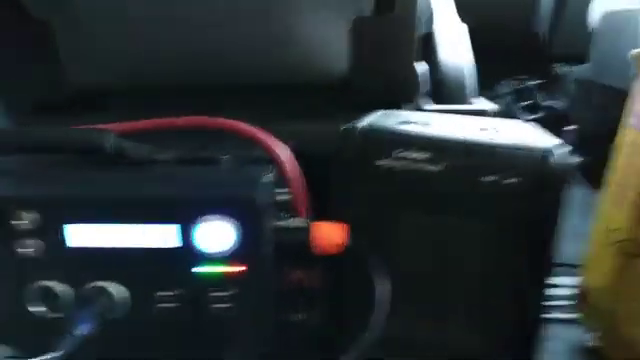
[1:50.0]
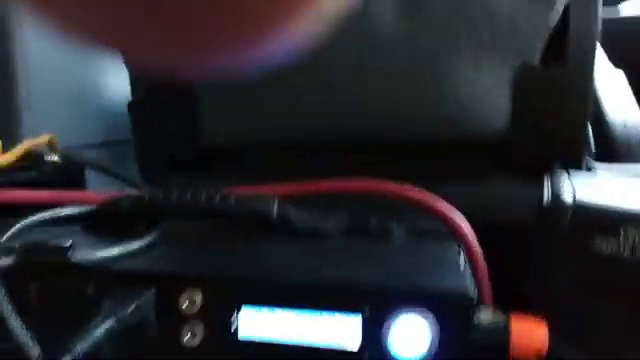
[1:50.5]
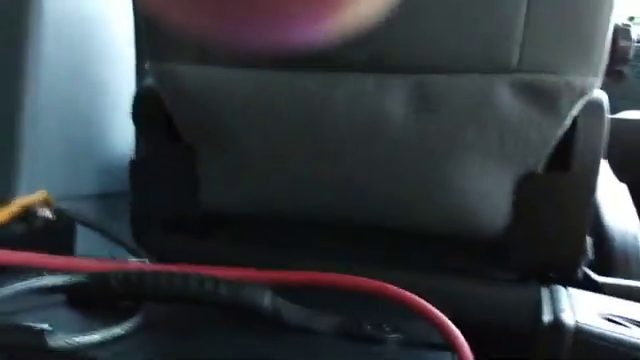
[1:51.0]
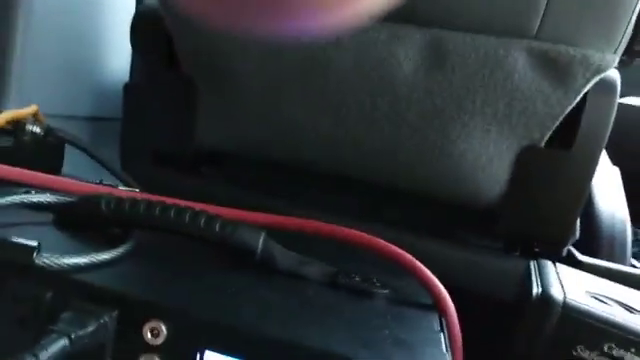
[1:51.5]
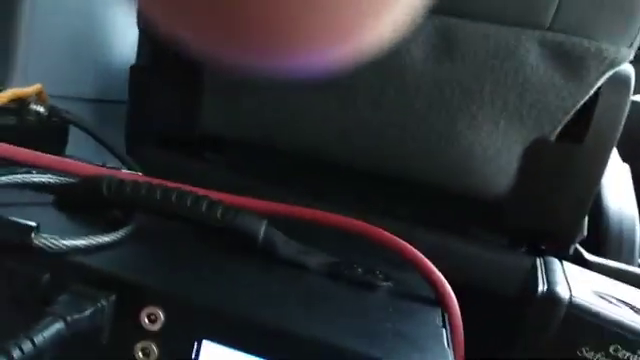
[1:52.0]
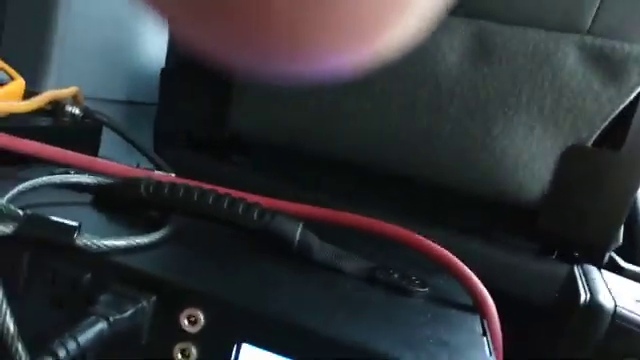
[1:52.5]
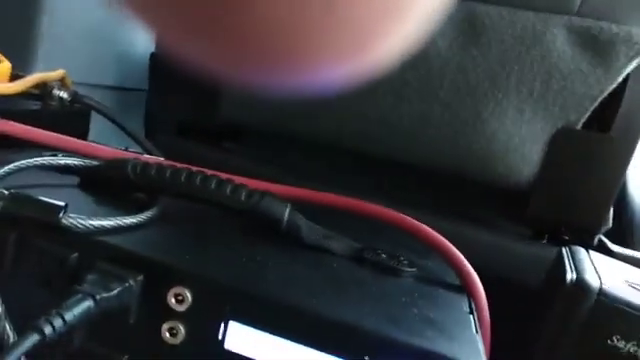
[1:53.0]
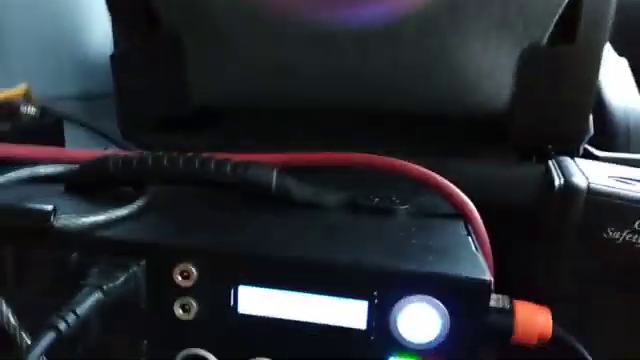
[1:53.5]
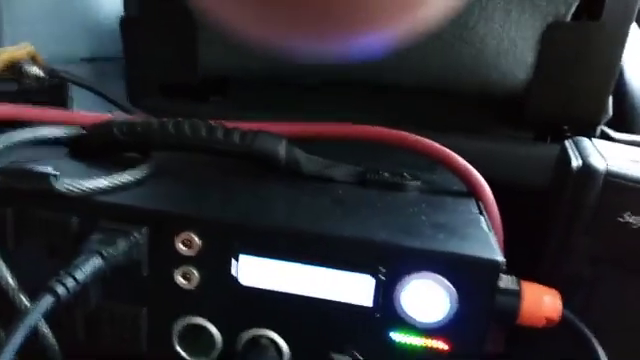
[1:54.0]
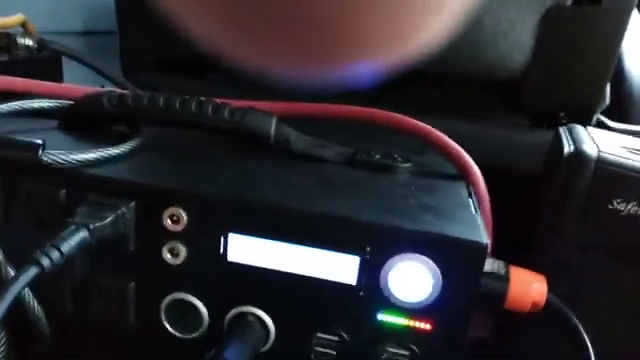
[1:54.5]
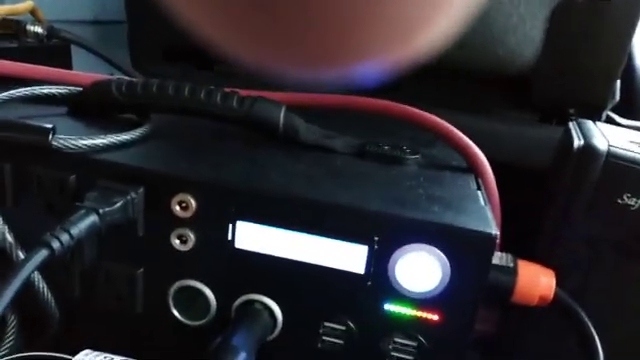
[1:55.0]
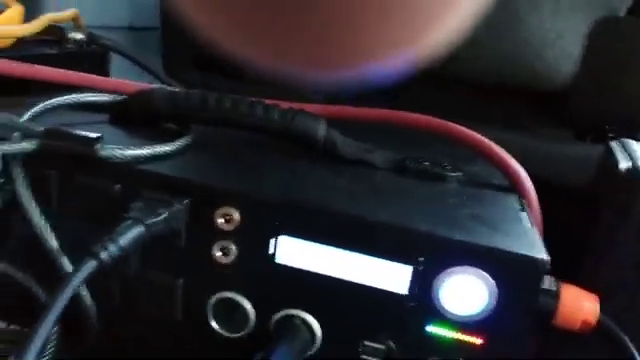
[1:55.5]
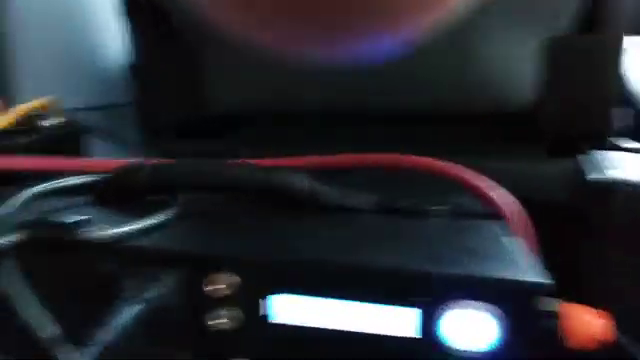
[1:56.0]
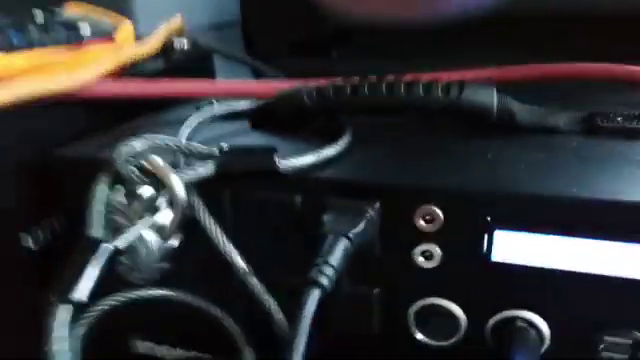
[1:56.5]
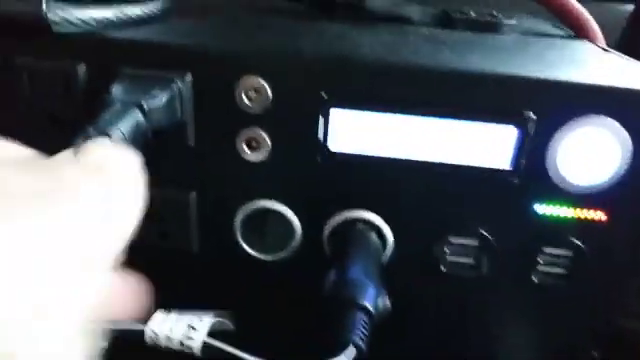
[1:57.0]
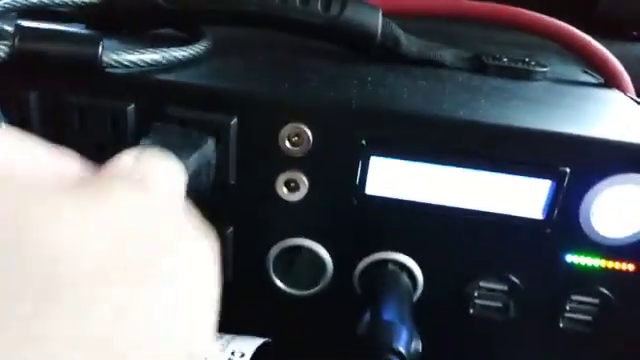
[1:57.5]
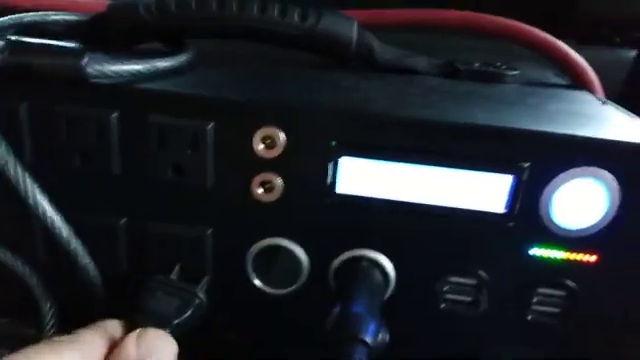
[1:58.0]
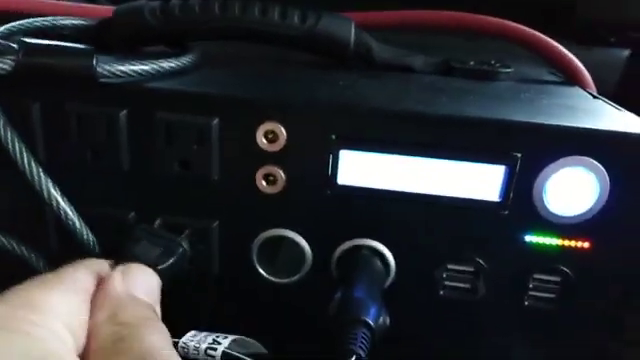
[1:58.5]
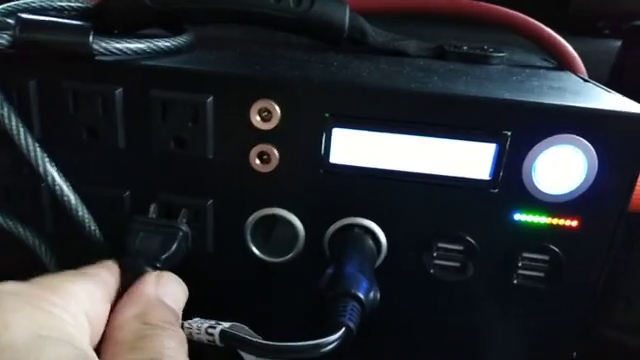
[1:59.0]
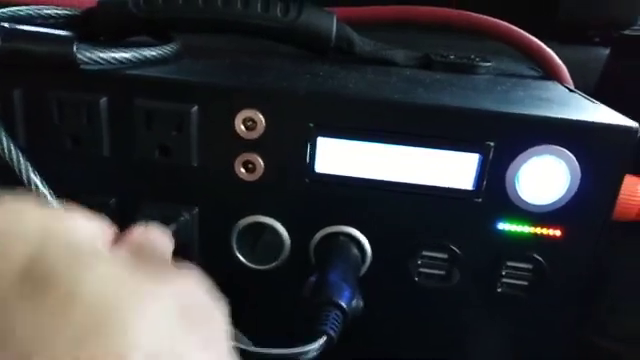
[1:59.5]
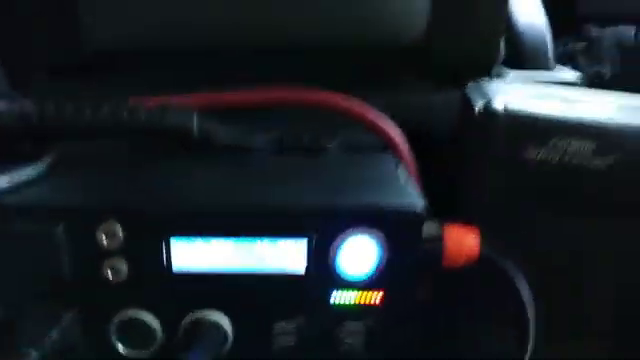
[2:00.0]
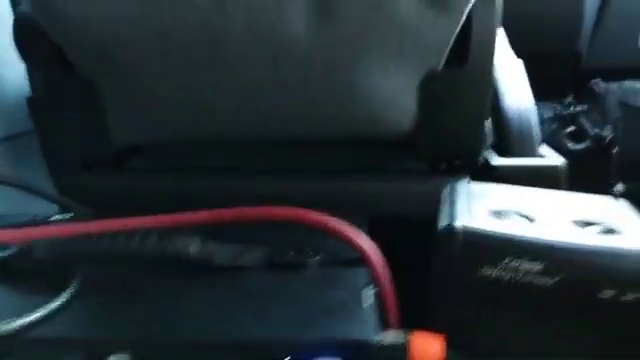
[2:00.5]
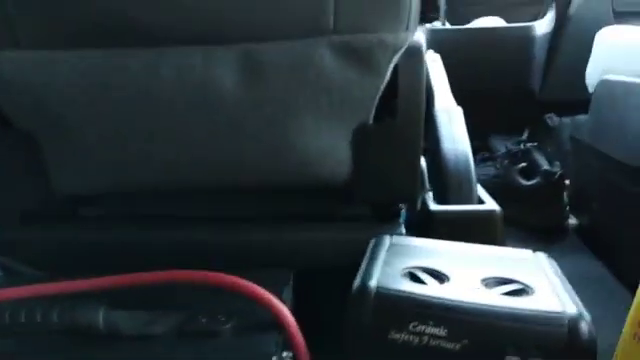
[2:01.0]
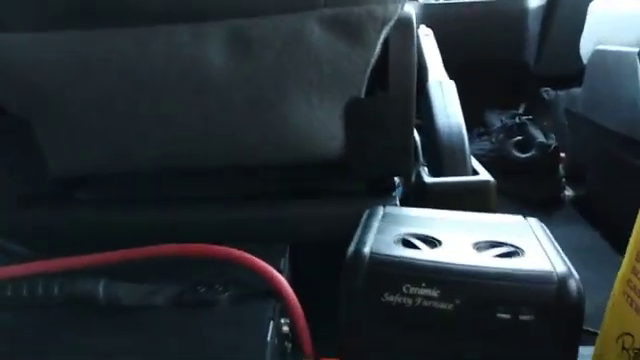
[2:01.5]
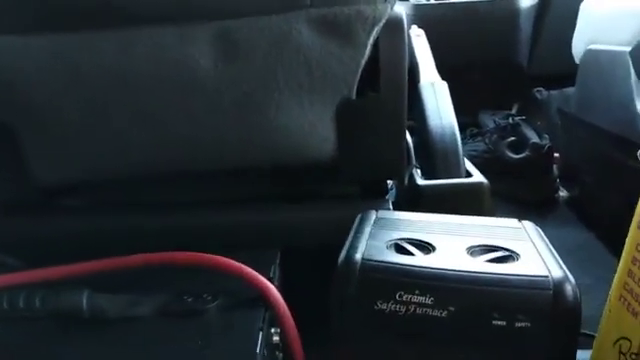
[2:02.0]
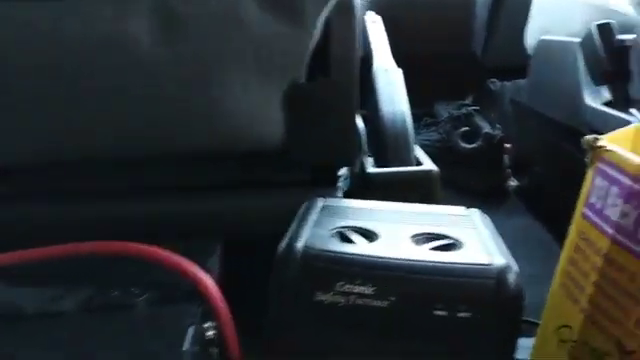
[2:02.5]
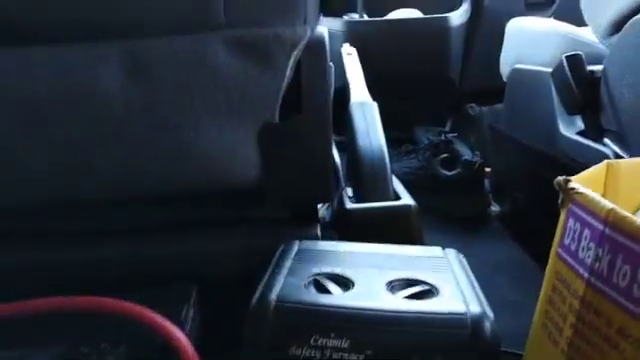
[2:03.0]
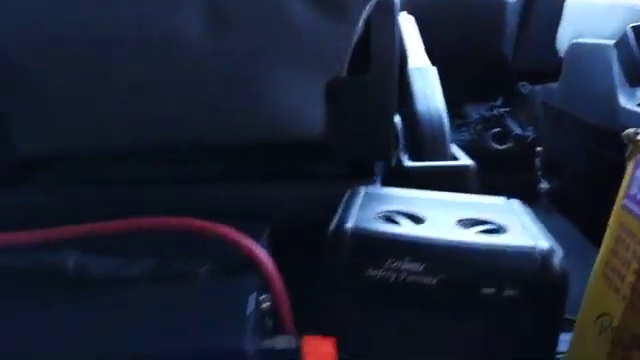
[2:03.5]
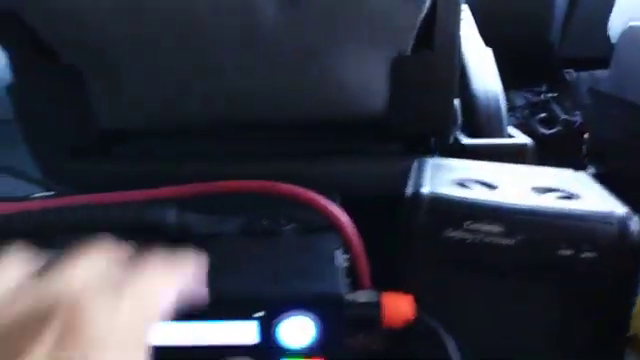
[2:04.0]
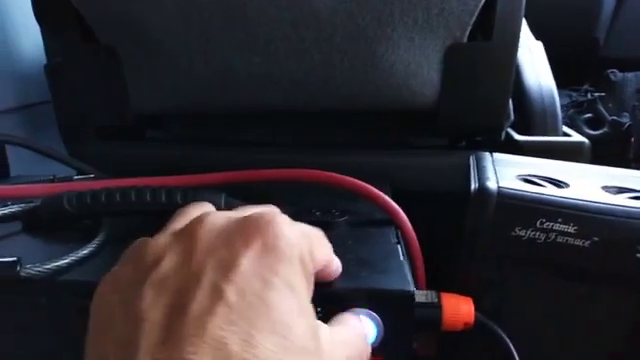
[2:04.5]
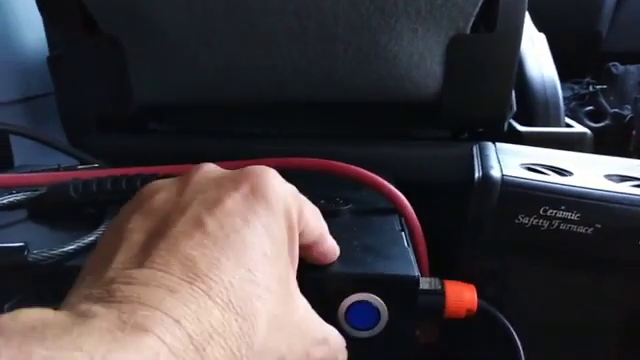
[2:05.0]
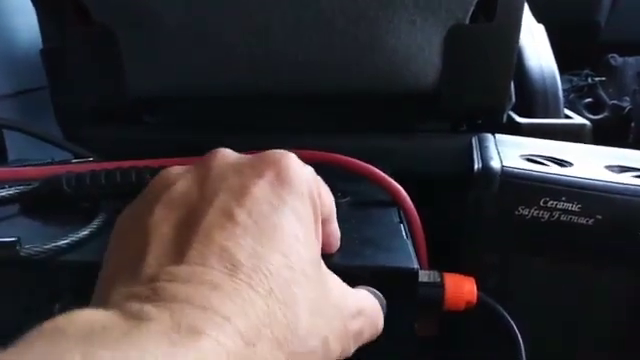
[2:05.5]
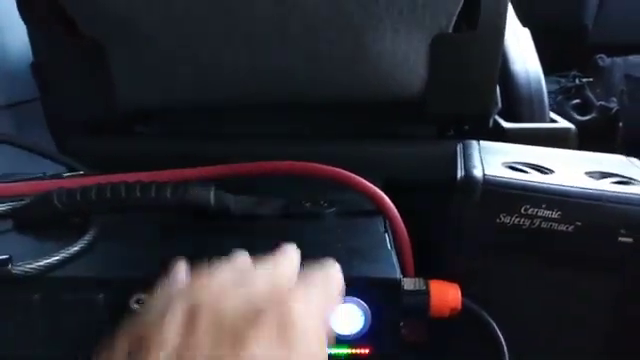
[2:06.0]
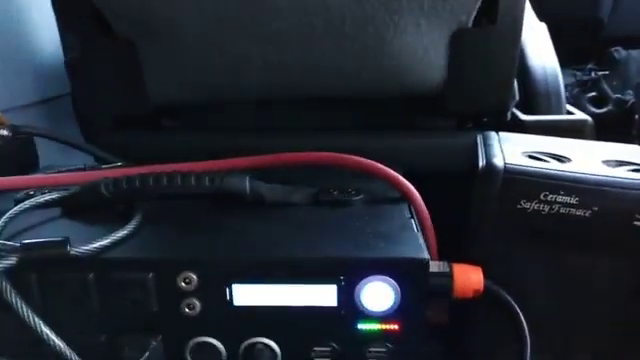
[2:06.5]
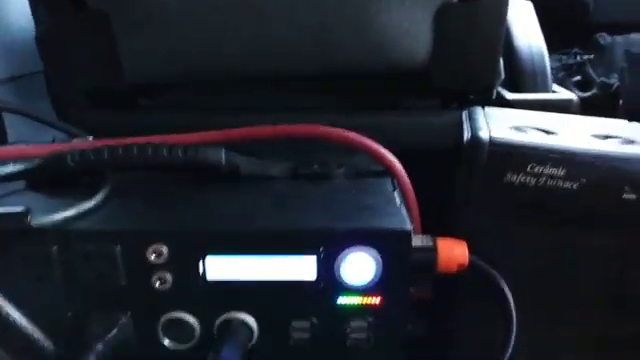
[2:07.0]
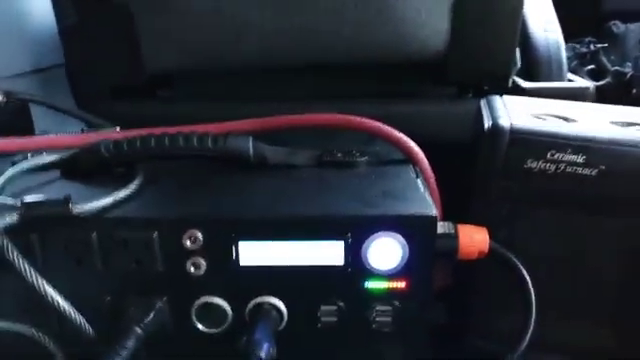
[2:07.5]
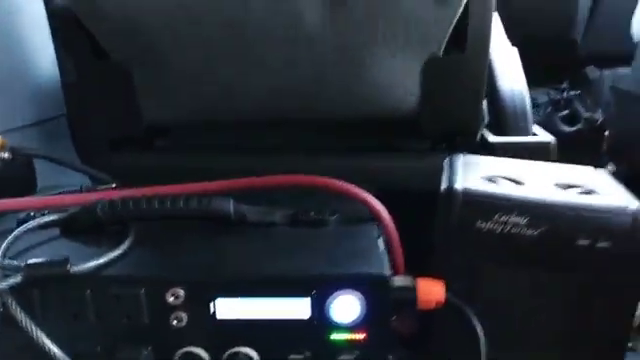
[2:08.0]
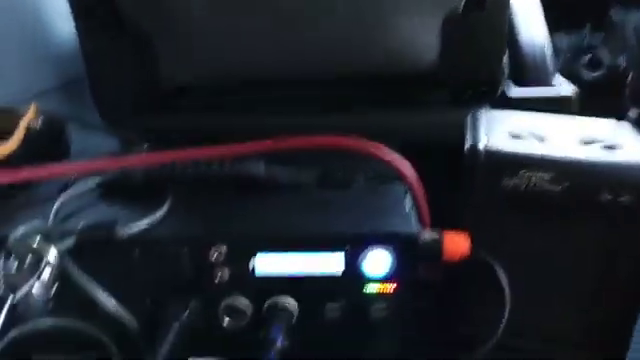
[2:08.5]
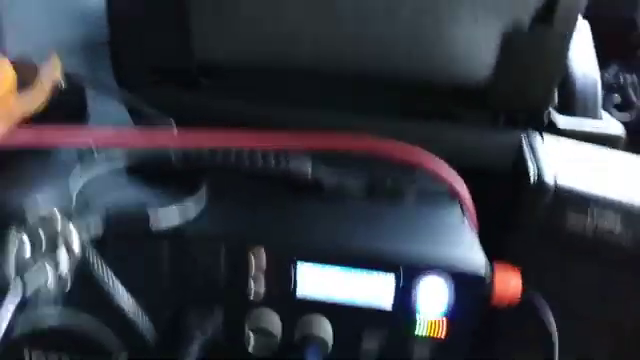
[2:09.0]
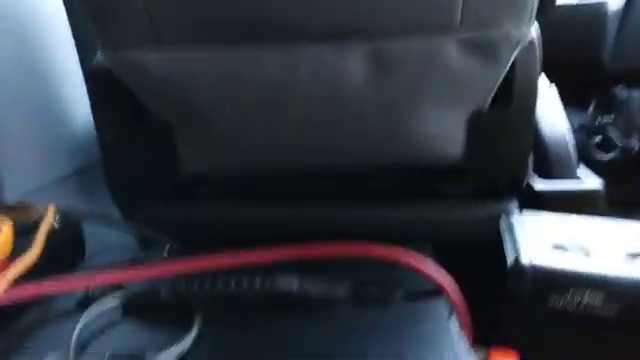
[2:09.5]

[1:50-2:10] The shot is panned out further, showing the whole box. The rectangular screen is visible but its numbers cannot be read. On the right of the box are two small copper-looking circular connectors, like cable outlet screw connectors. To the right of those are two three-prong outlet sockets, with another two below them. A hand moves the plug from an upper socket to a lower socket.